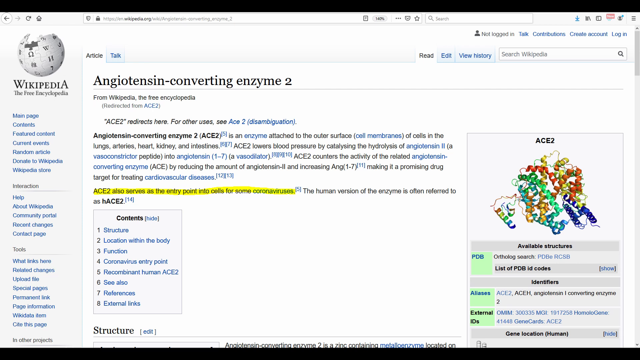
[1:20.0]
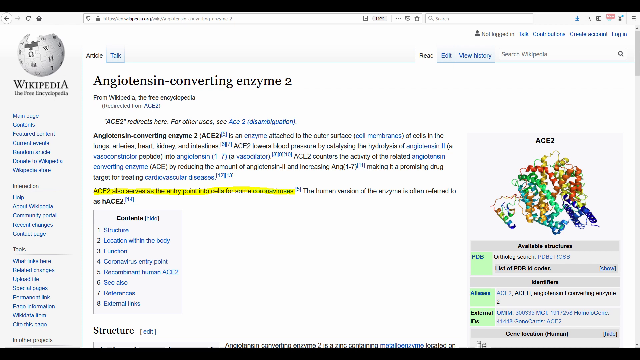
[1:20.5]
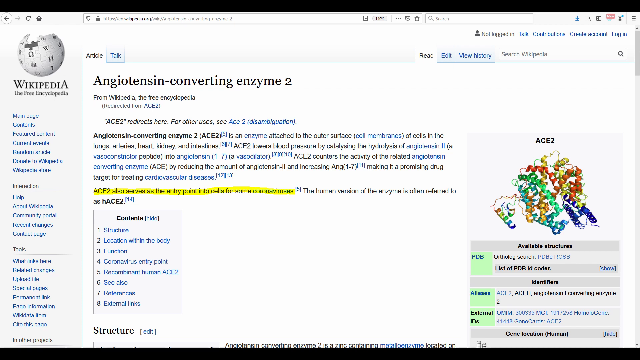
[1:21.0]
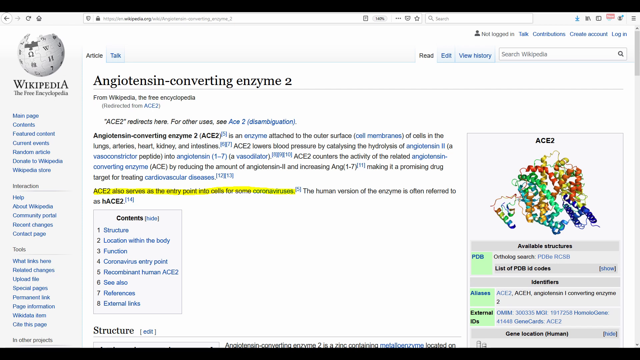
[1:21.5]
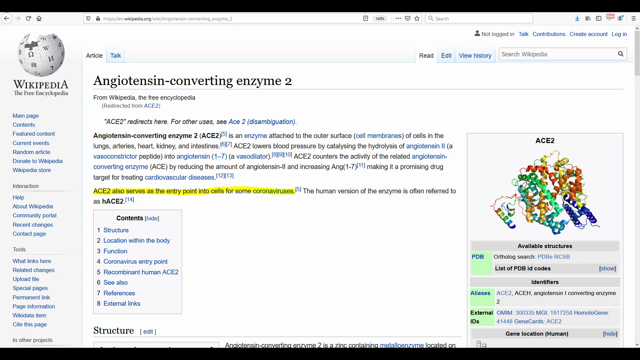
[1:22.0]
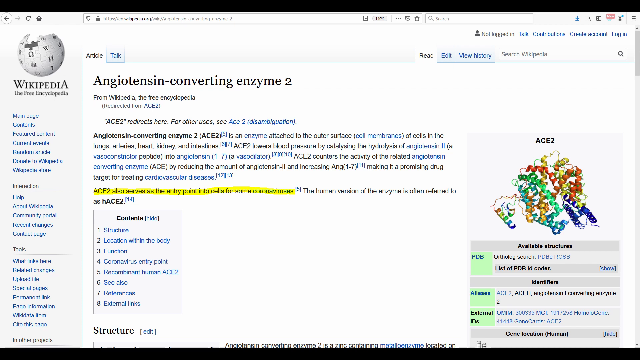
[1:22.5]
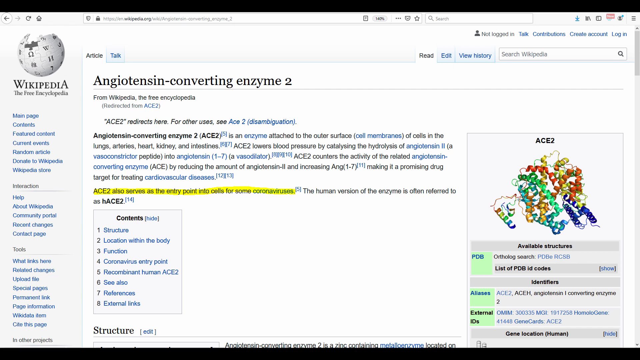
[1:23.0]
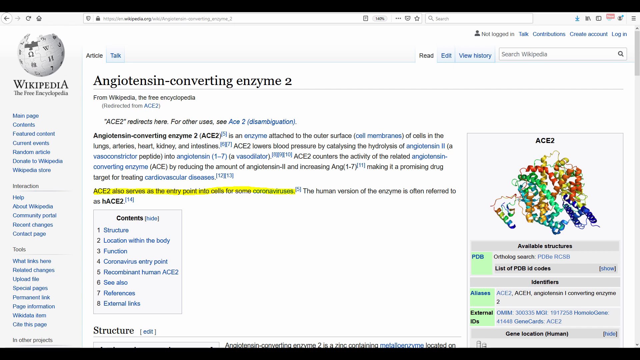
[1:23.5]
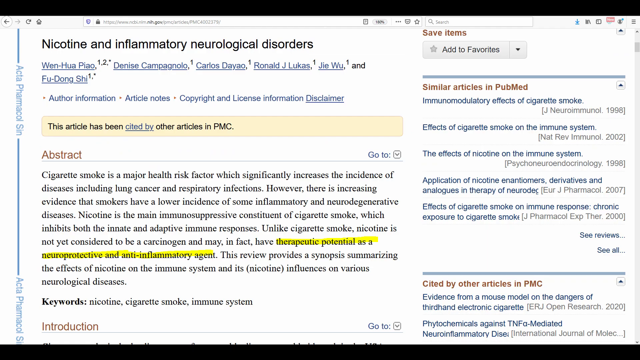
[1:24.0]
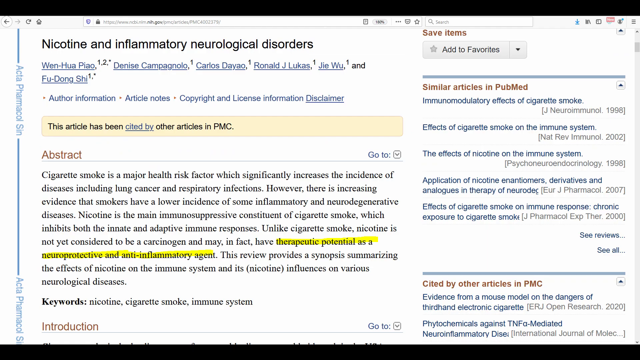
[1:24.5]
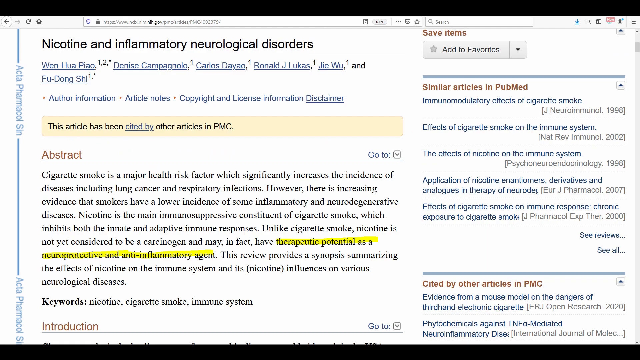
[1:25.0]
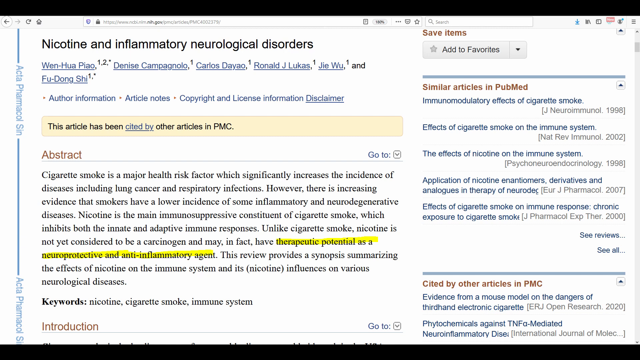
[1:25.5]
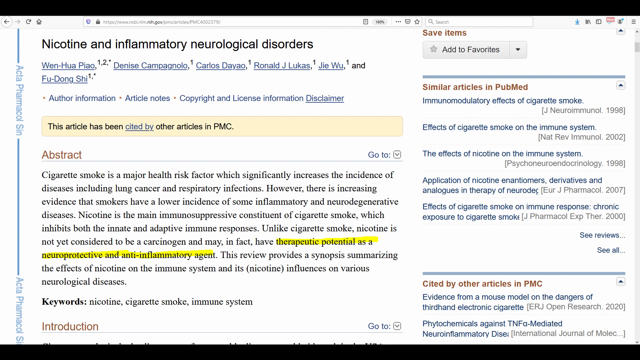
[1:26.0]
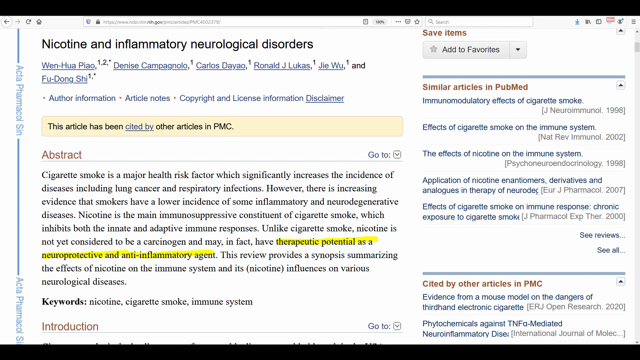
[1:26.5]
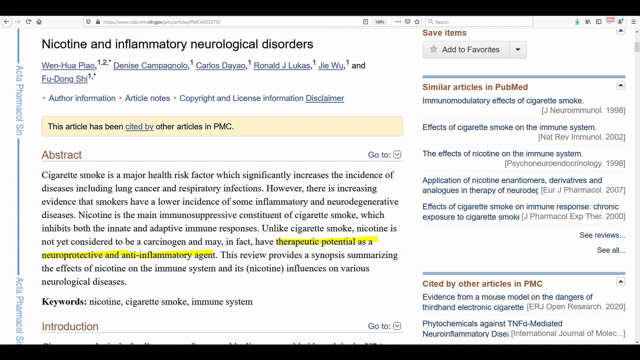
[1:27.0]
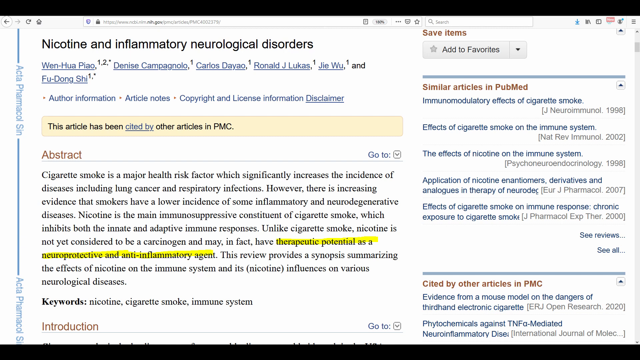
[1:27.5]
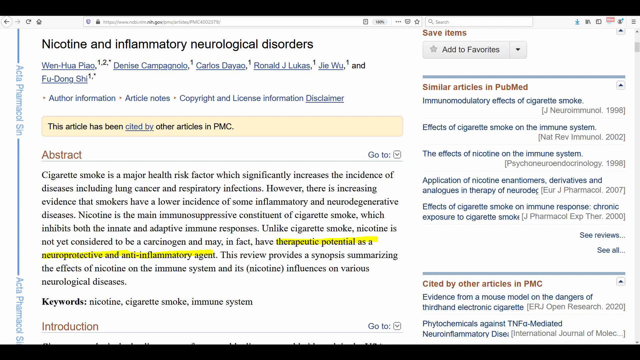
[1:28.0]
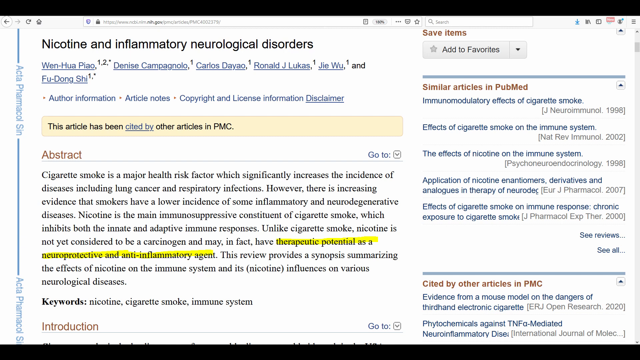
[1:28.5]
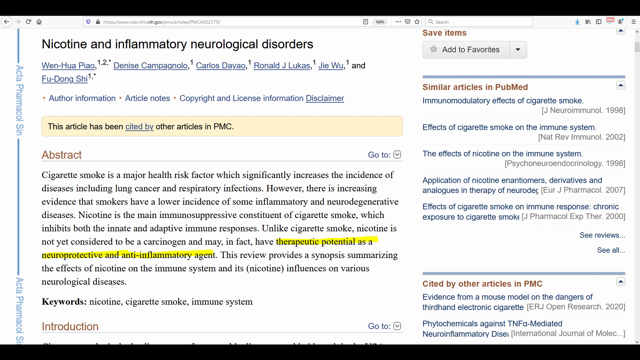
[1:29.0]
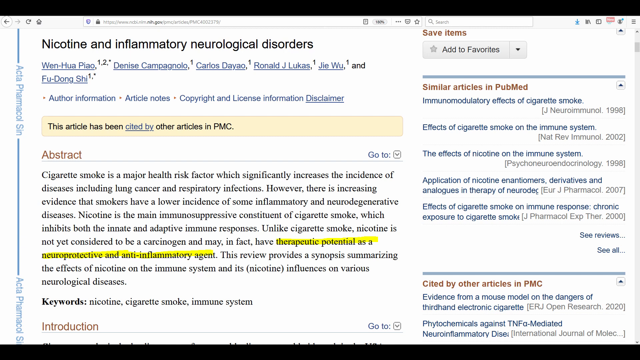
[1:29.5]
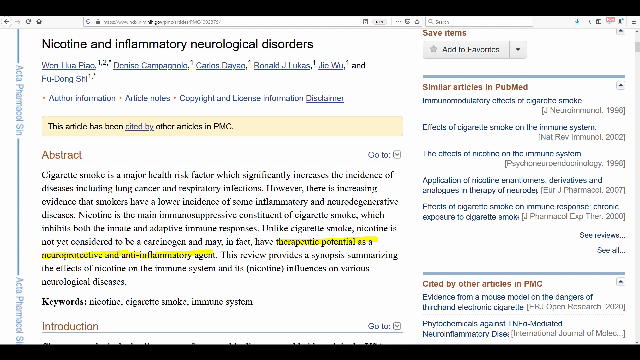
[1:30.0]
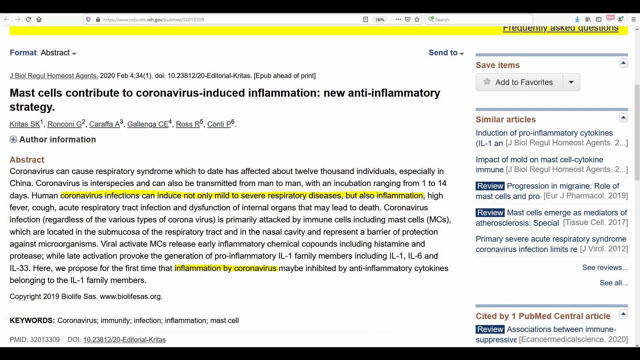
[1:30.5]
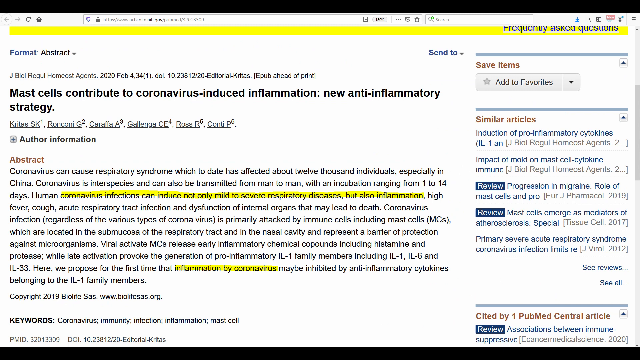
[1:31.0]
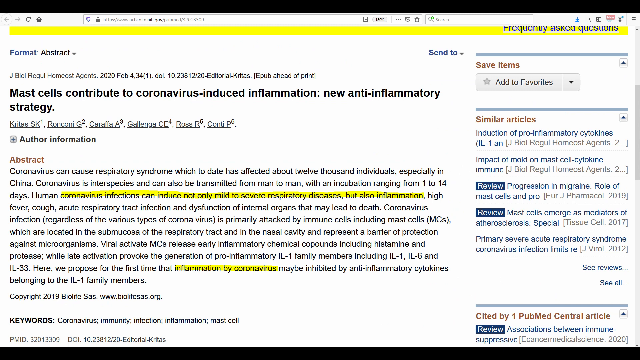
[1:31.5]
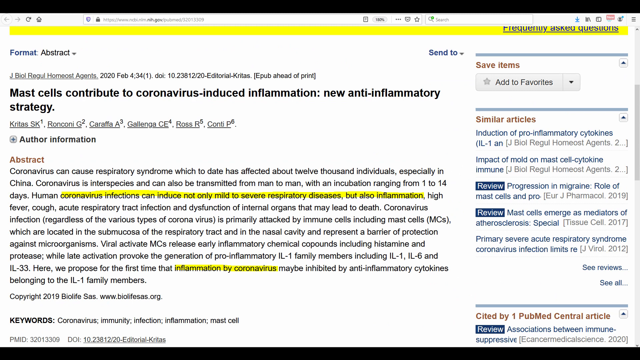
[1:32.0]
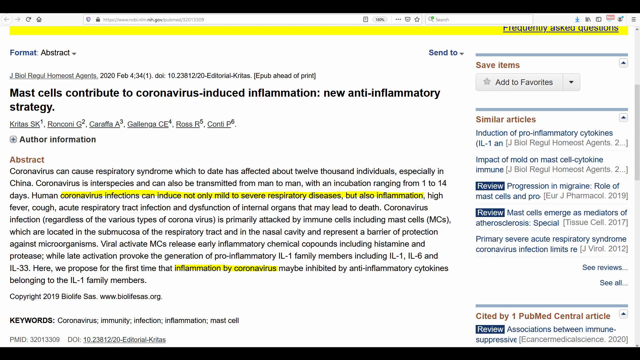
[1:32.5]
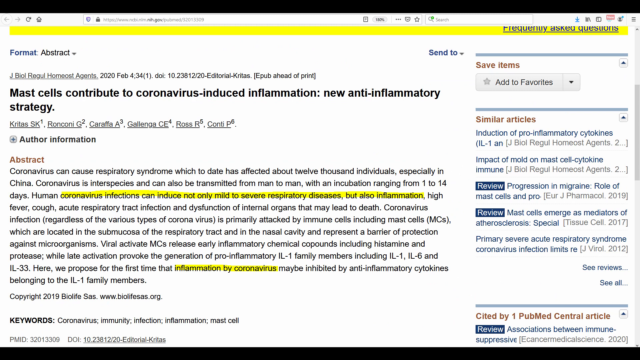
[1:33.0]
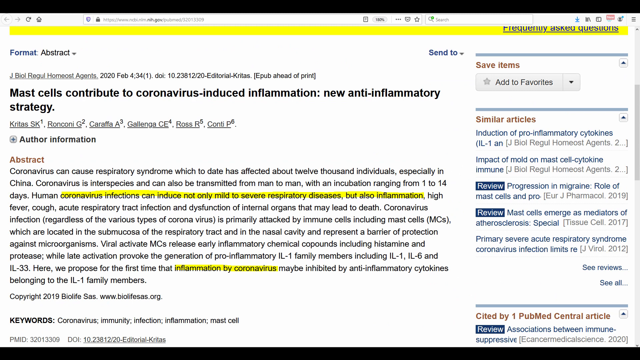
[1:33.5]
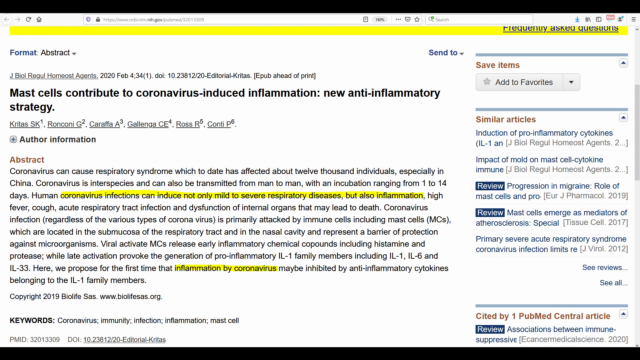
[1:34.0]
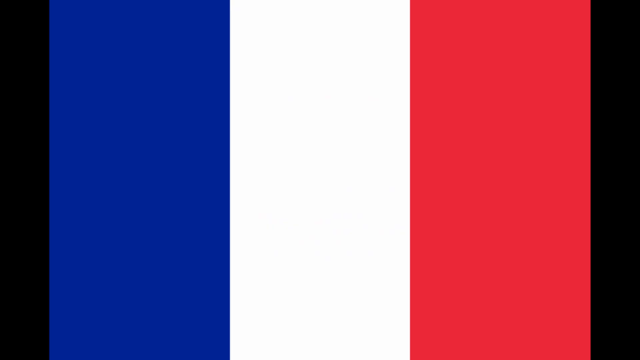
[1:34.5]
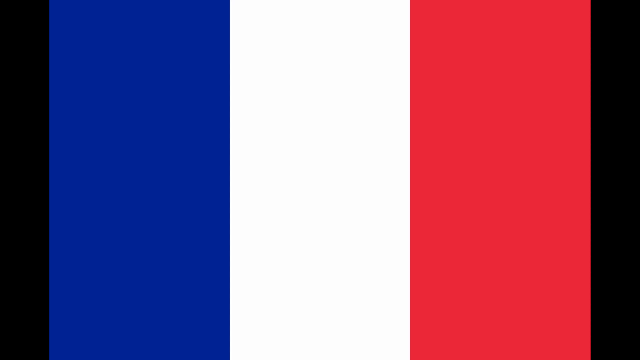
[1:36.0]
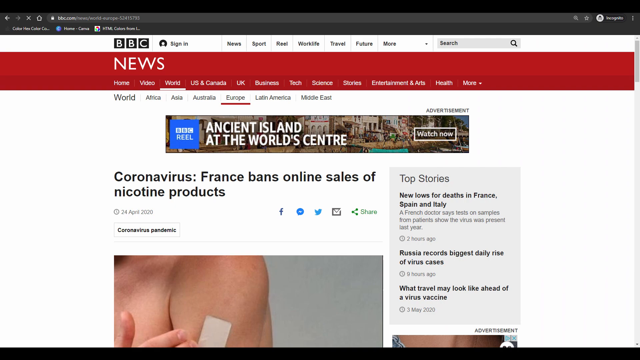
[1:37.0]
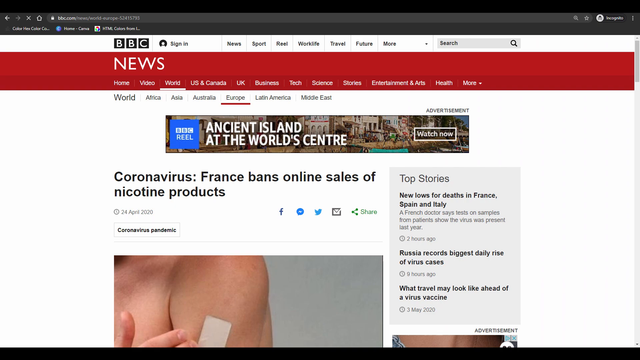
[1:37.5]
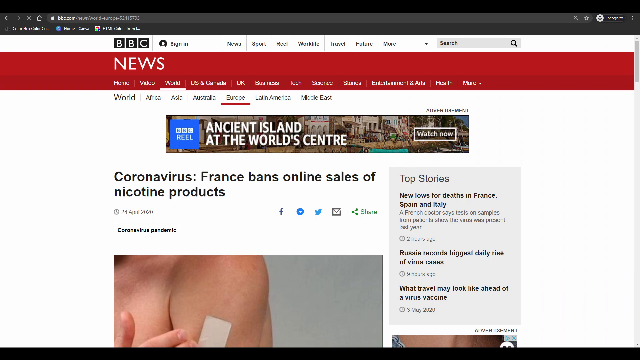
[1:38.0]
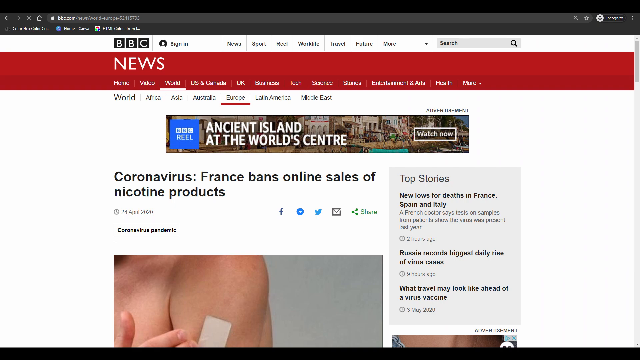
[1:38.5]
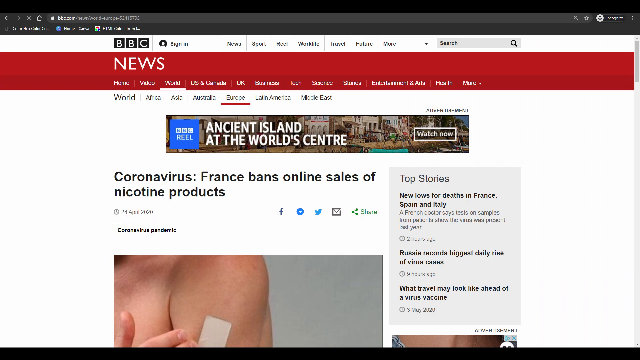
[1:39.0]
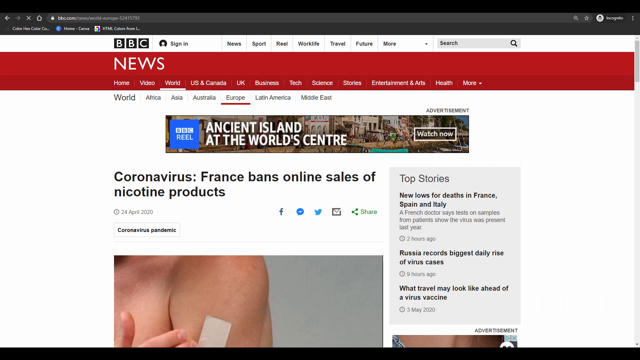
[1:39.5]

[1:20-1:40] The Wikipedia page for angiotensin-converting enzyme 2 is shown, with the article listed underneath the title. There are blue columns on the left-hand side and an illustration on the right-hand side. The scene changes to a scientific paper titled "Nicotine and Inflammatory Neurological Disorders." The authors are listed below the title, and below them is the abstract, which begins: "Cigarette smoke is a major health risk factor which significantly increases the incidence of diseases, including lung cancer and respiratory infections." The article continues on from there. On the right-hand side of the page is a column headlined in red, "Similar Articles in PubMed," with a list of titles in blue below it. The scene changes to another abstract, titled "Mast Cells Contribute to Coronavirus-Induced Inflammation, New Anti-Inflammatory Strategy," with the authors listed below the title and the abstract below them. On the right-hand side, a column under a red headline says "Similar Articles," and a number of articles are listed with blue headlines. The image changes to the French flag, and then to a BBC News web page with the headline "Coronavirus, France Bans Online Sale of Nicotine Products."